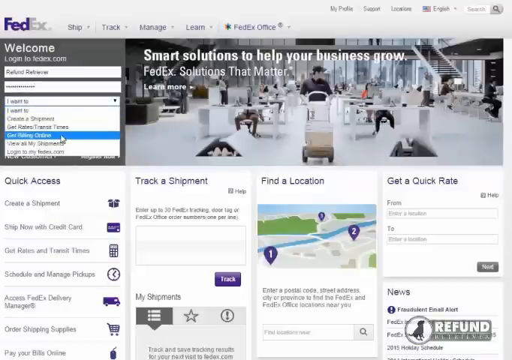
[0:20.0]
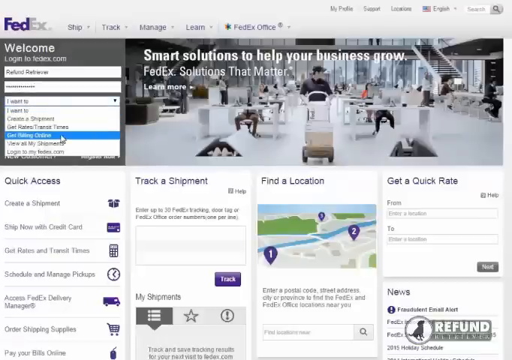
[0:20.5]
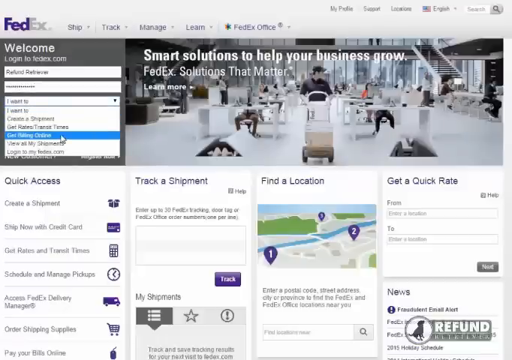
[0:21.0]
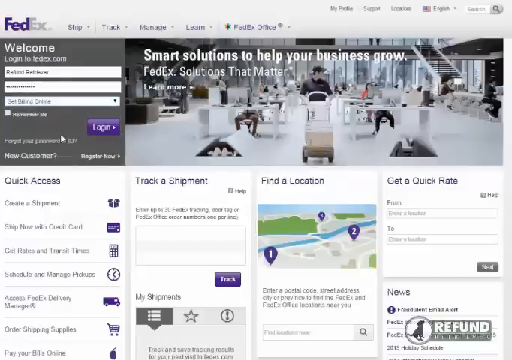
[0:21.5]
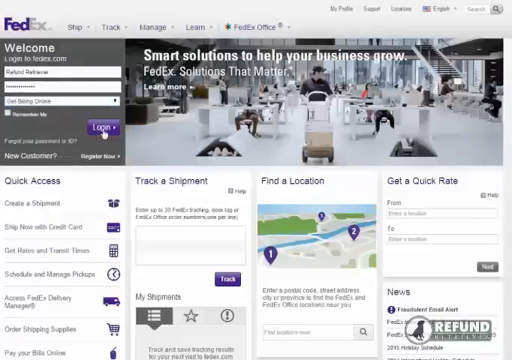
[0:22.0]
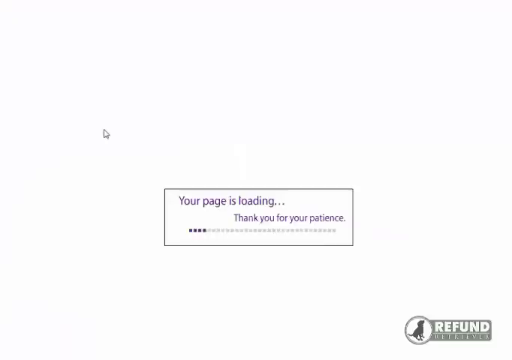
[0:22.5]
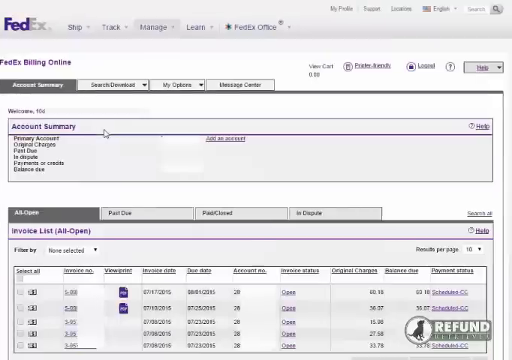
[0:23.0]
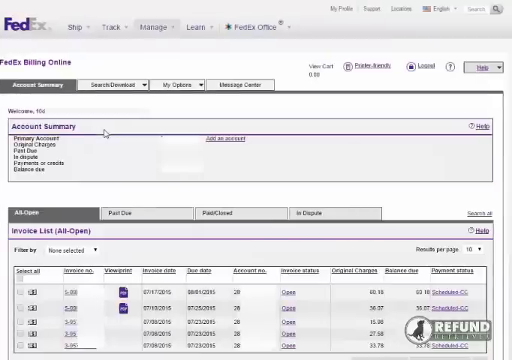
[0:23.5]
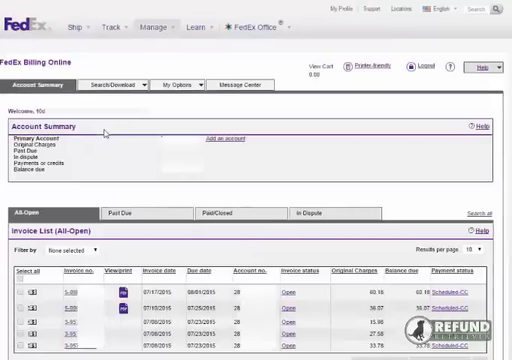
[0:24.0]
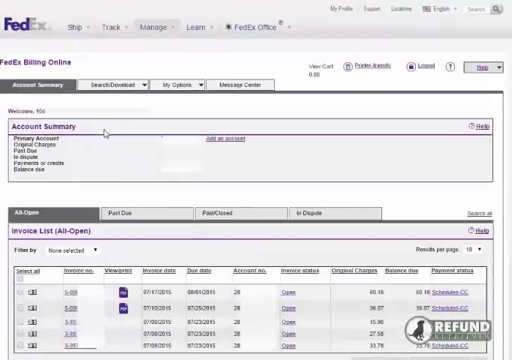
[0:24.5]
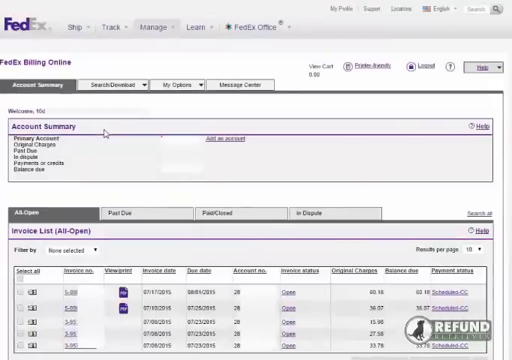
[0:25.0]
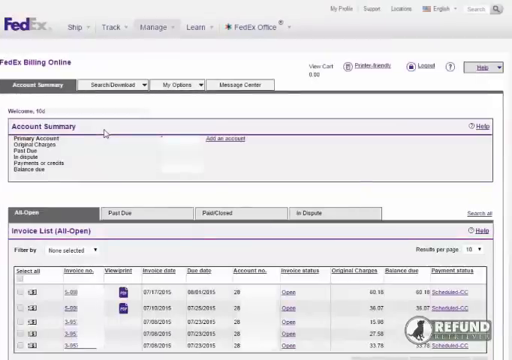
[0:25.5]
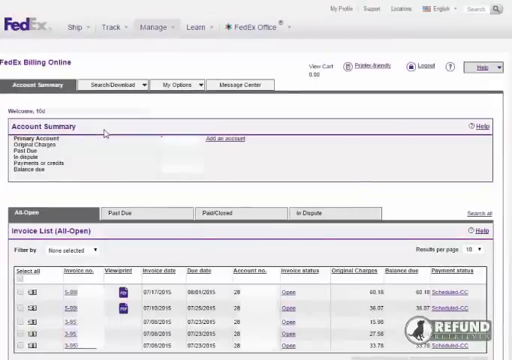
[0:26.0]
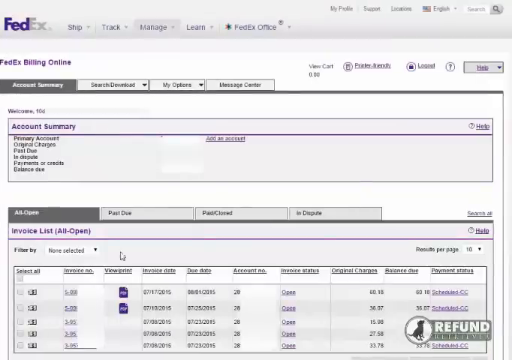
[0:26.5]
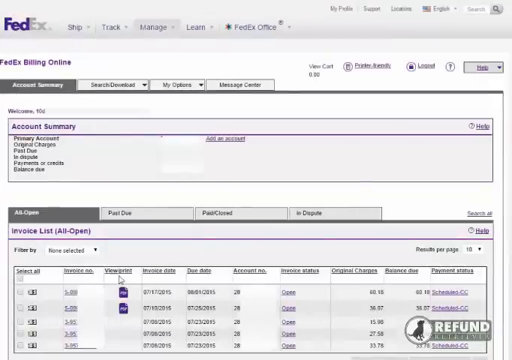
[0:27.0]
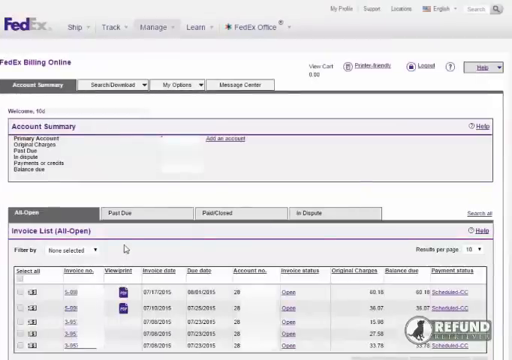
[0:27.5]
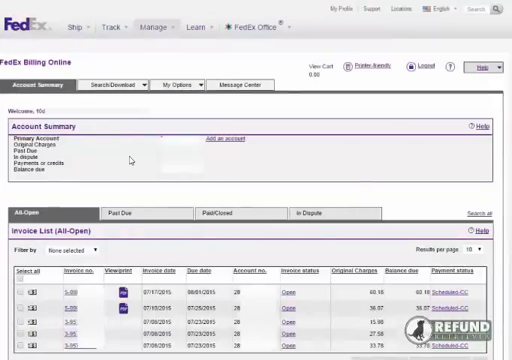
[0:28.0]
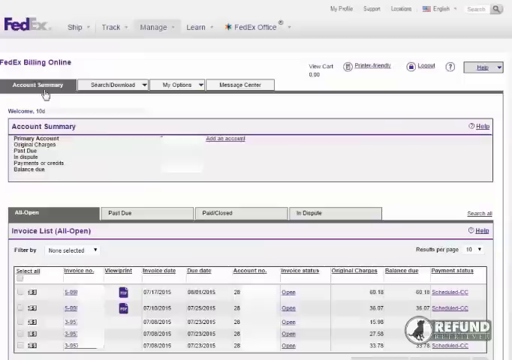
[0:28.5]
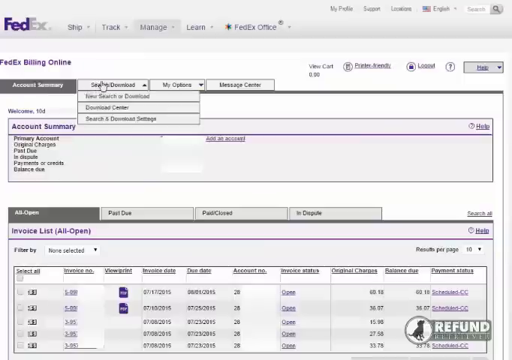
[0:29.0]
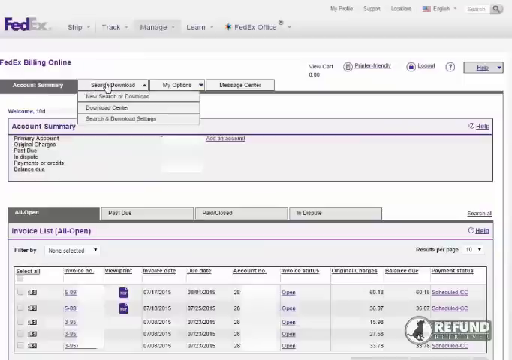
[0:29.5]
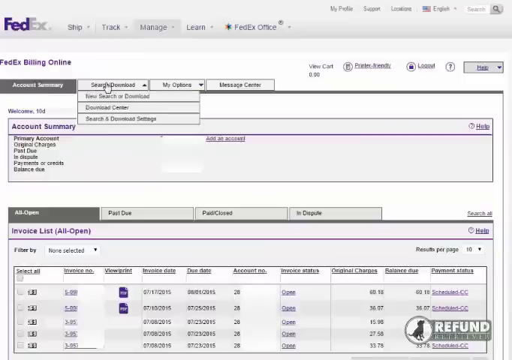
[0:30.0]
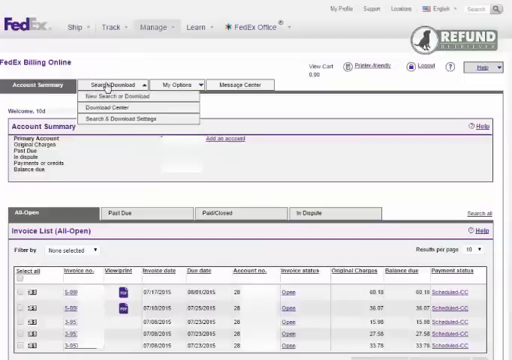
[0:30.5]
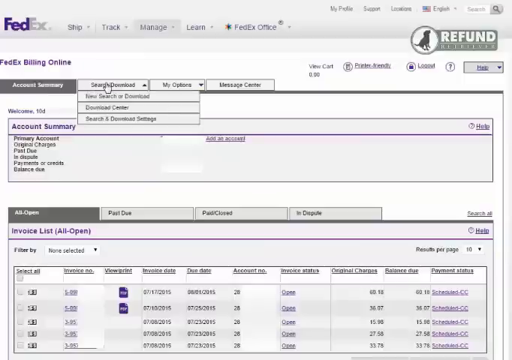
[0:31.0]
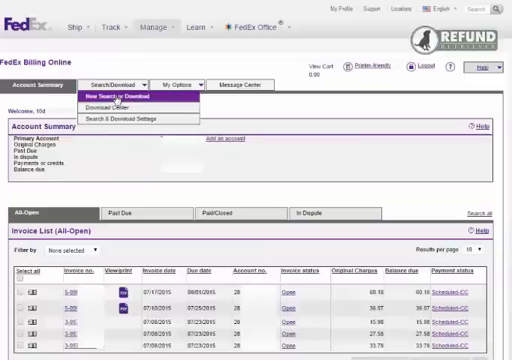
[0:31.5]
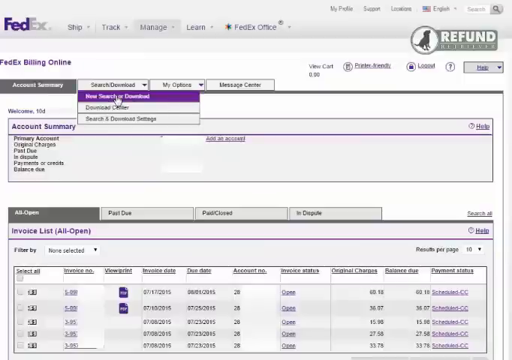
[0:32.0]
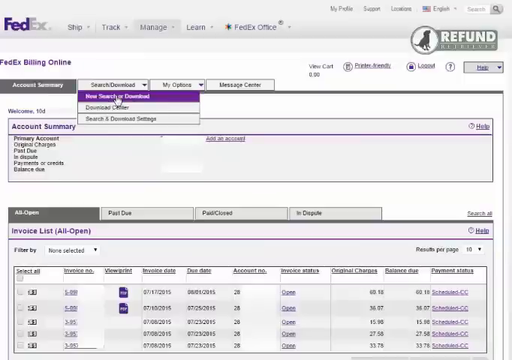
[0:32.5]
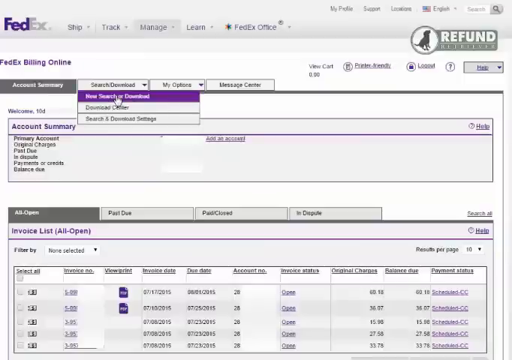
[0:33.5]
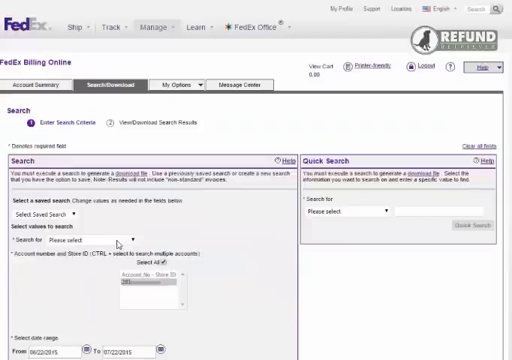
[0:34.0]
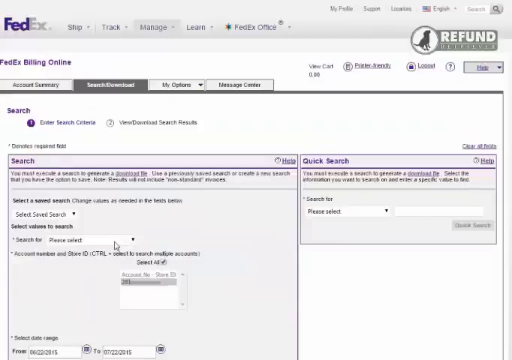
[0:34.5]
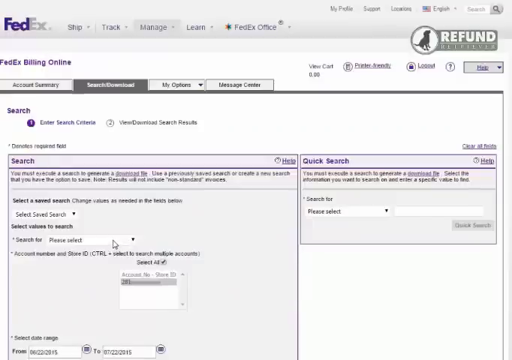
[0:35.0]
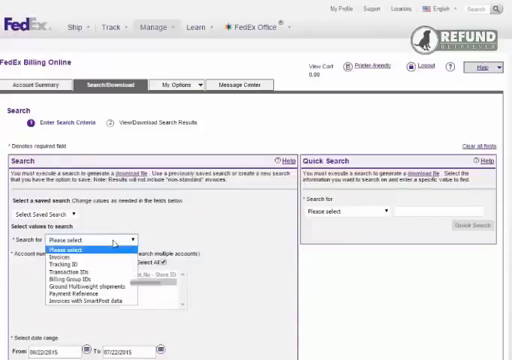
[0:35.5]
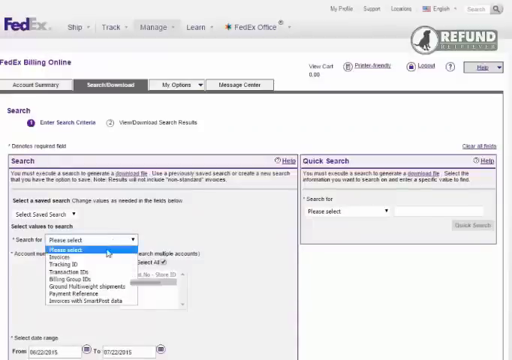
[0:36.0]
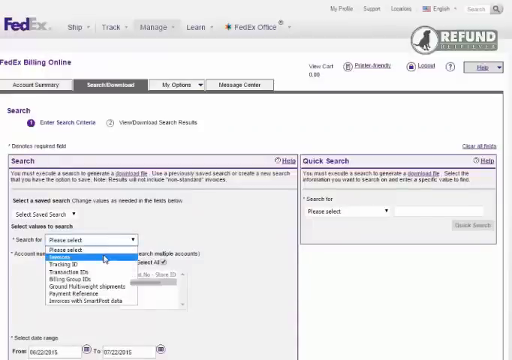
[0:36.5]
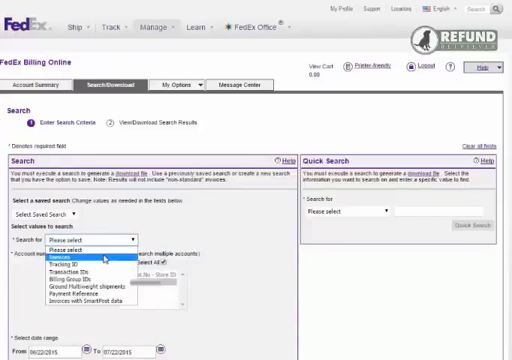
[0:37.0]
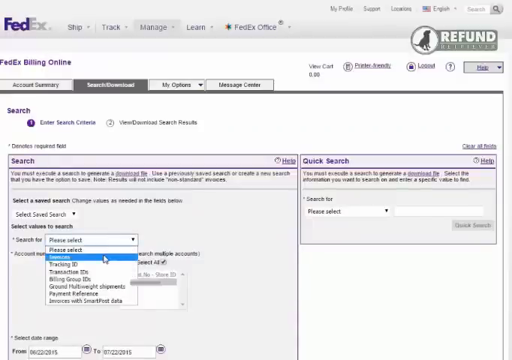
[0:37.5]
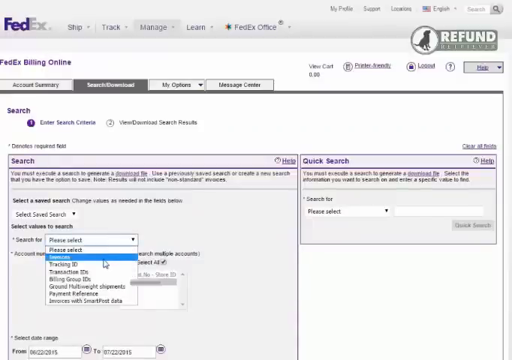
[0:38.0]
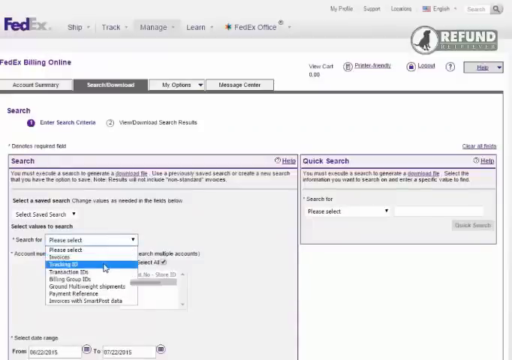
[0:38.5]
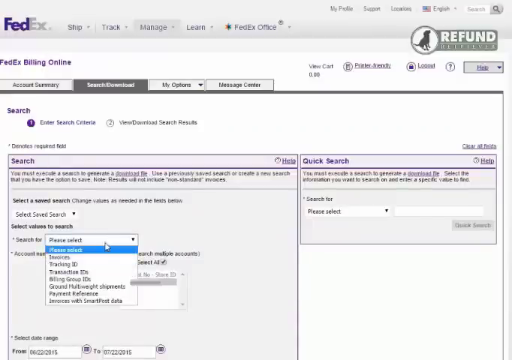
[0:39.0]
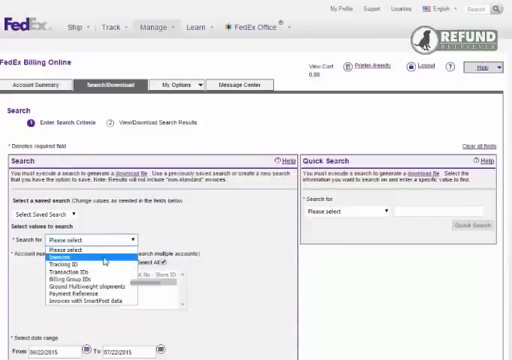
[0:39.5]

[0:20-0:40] On the FedEx website, a login menu is in the top left corner, and the person seems to have entered all their information. The cursor hovers over one of the options in a drop-down menu, highlighting it in blue, and the option is selected. The person then clicks a purple button with text that says "login," and the site navigates to another window with the title "account summary" in purple text on the top left side. Underneath it is a list of options, and there are also four tabs, with what seem to be more options beneath them. The person clicks on a different tab that has a drop-down menu, hovers over one of its options, which is highlighted in purple, and clicks on it. This navigates to another page that says "search" at the top. The person clicks a drop-down menu, a small set of options appears, and the part under the cursor is highlighted in blue. The cursor seems to move downward, and eventually an option is selected.